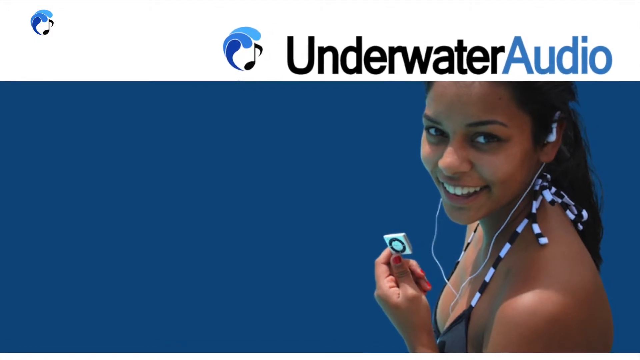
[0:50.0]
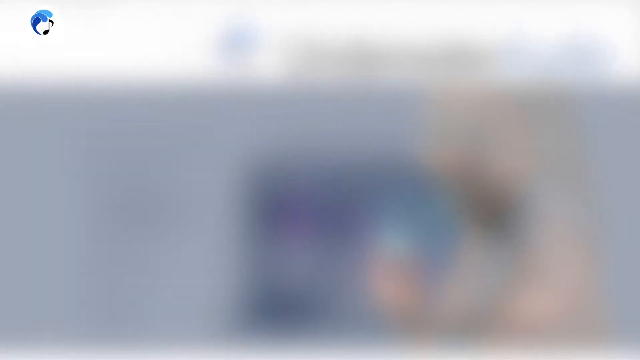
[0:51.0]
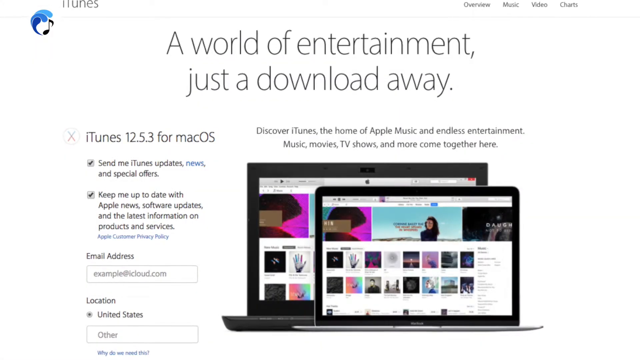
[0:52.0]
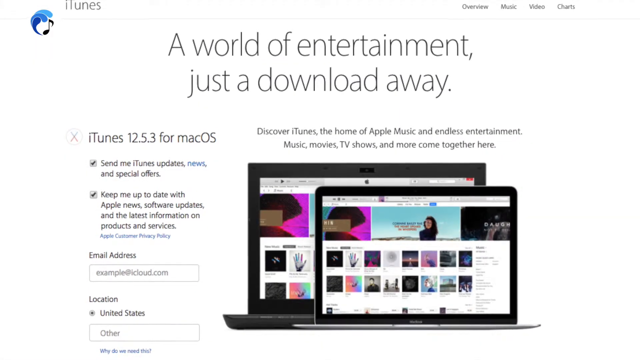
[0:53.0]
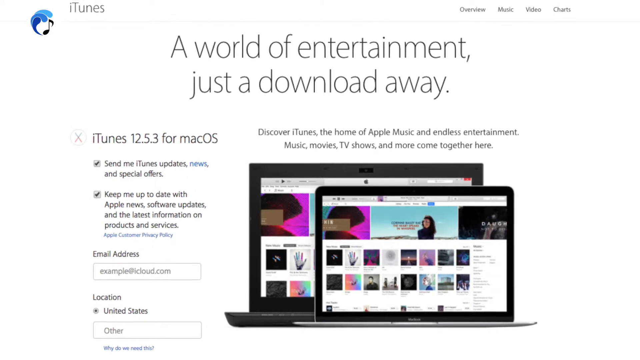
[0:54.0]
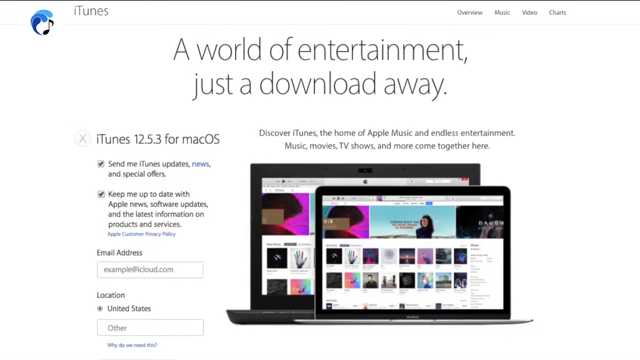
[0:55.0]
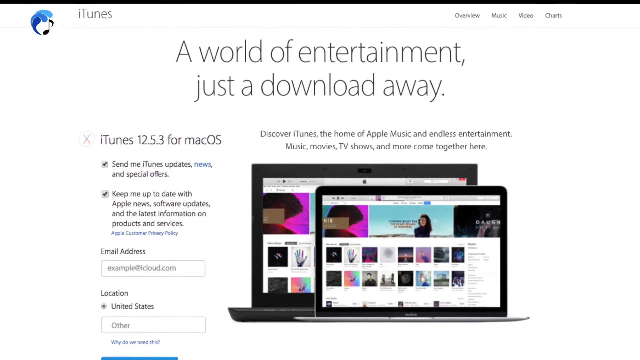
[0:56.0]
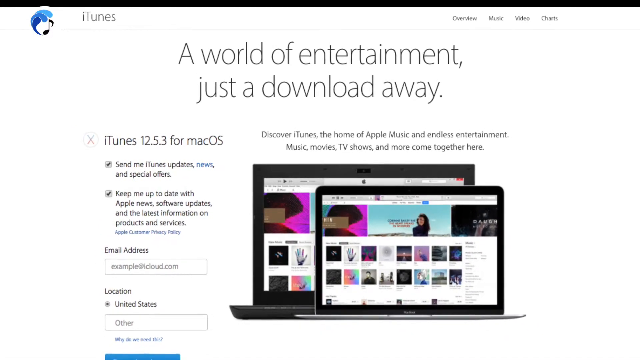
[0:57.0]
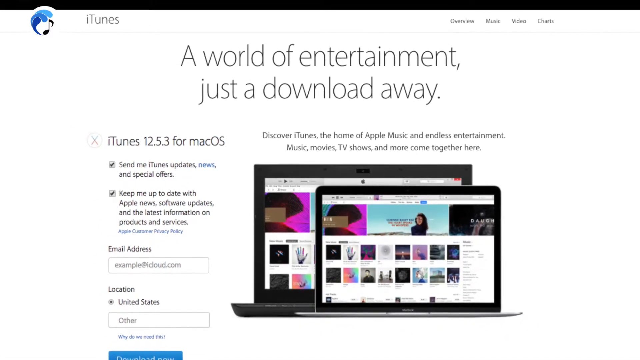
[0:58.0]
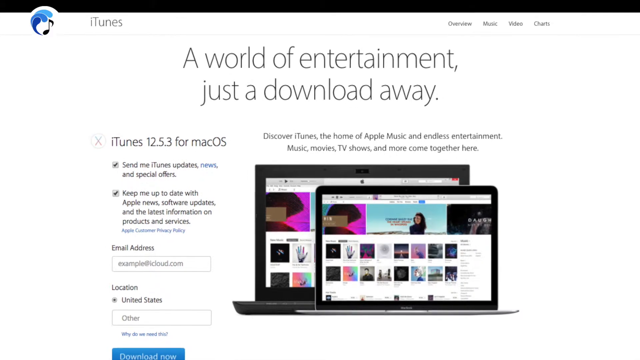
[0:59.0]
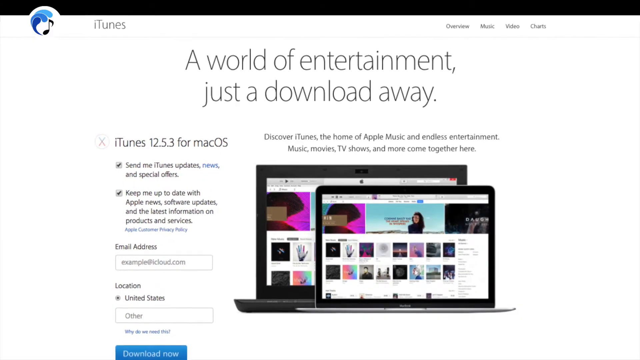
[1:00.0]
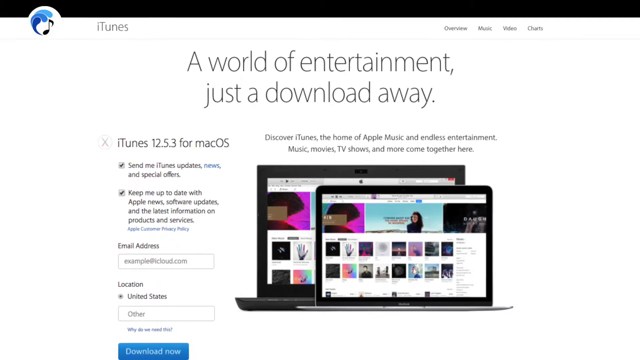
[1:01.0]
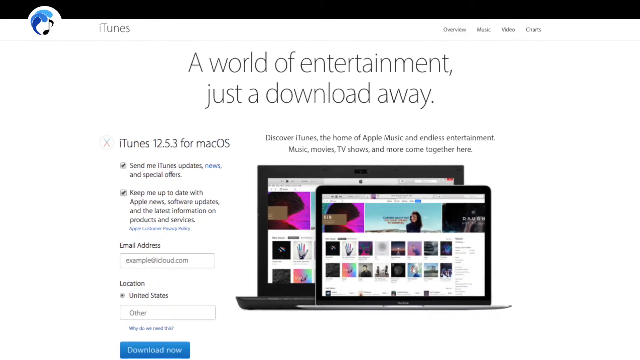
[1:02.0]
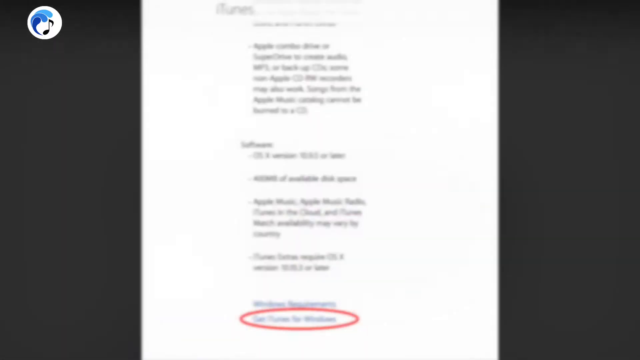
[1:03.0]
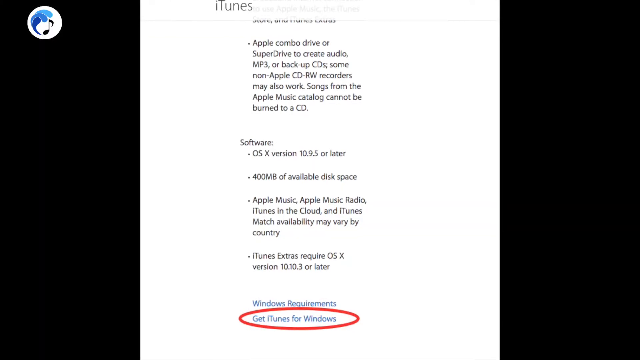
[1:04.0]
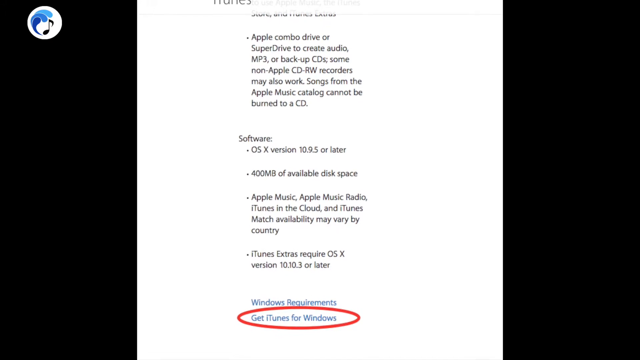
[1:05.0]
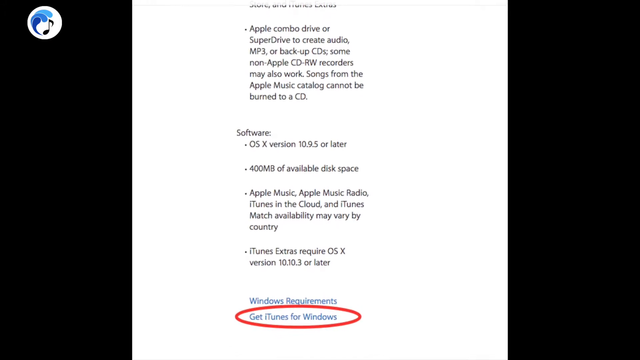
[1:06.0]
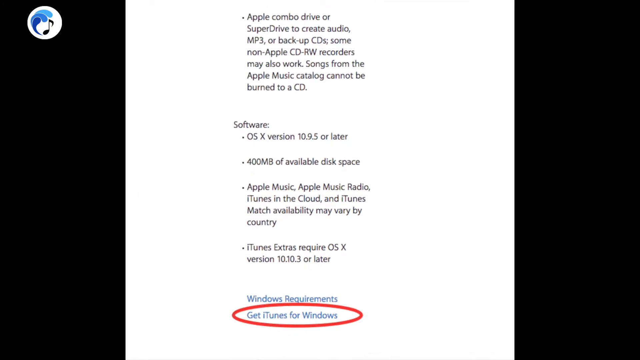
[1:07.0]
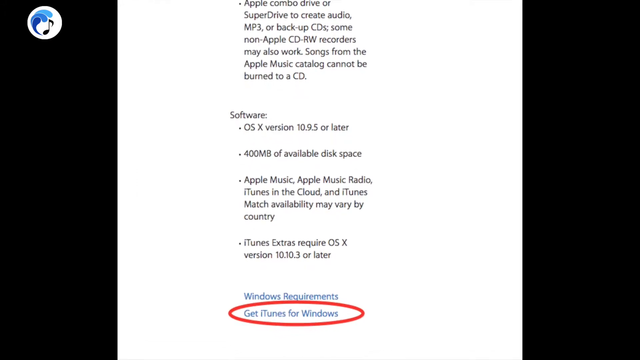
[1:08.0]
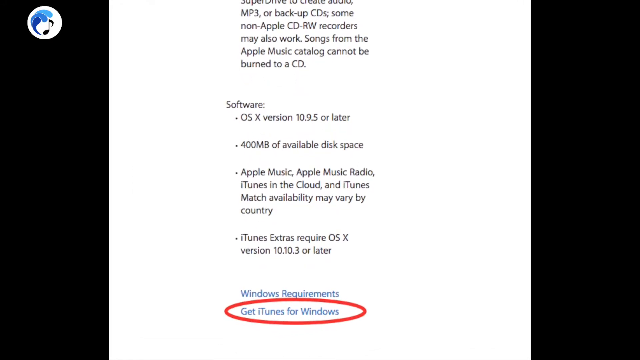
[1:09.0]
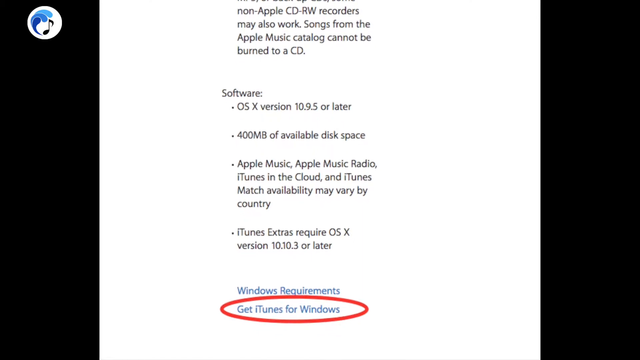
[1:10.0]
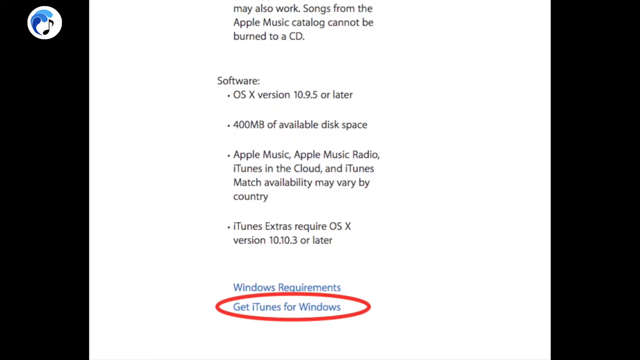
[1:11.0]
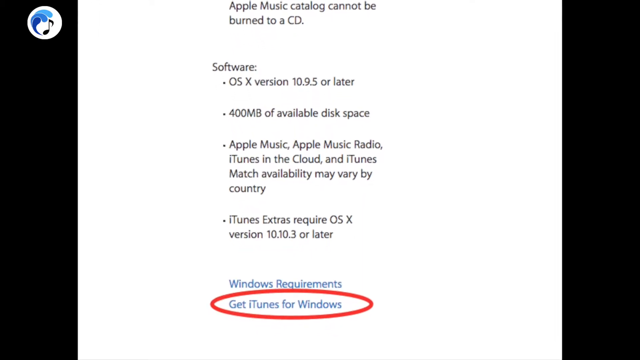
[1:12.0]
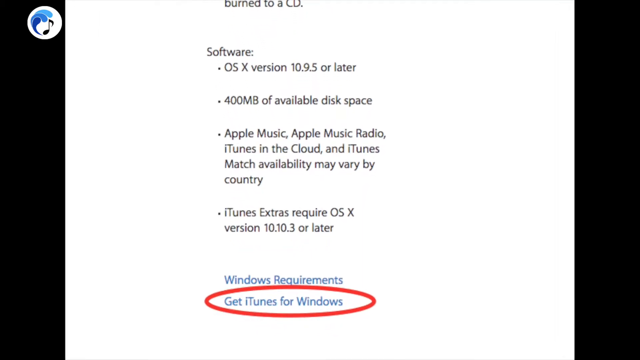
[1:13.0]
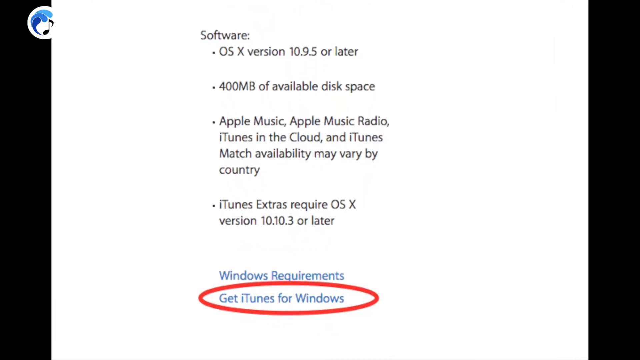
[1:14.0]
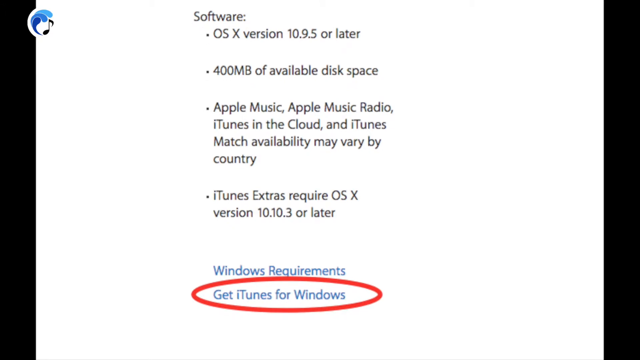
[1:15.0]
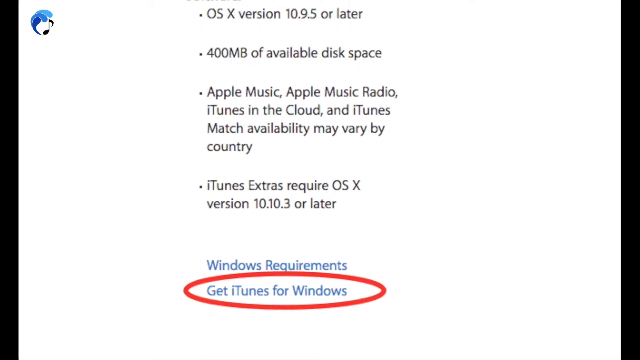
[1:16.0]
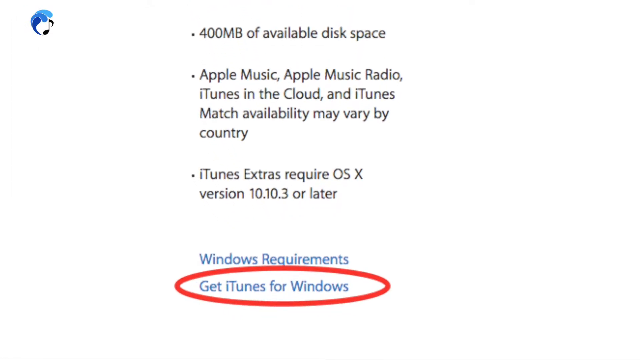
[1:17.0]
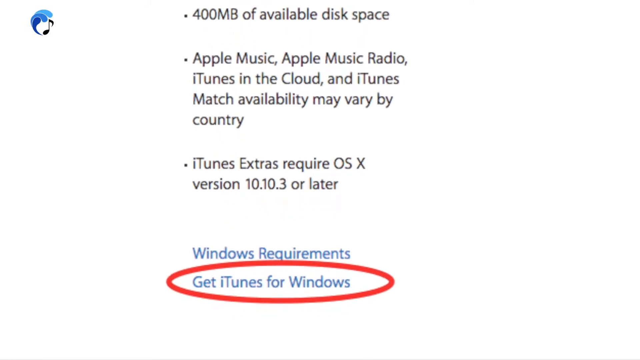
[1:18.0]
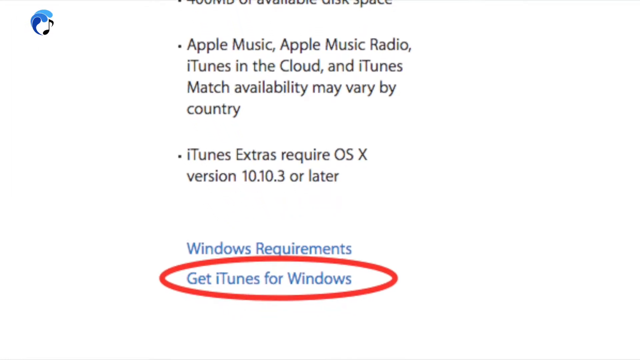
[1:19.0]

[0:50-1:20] The screen shows the smiling woman with "underwater audio" and the iPod Touch, then fades into the next page, which looks like the iTunes store online. Tabs at the top read "Overview," "Music," "Video" and "Charts," and "iTunes" appears in the left corner. Below that, in big letters, is apparently the title: "A World of Entertainment, just to download away." Under it is "iTunes 12.5.3 for macOS," then "Send me iTunes updates, news, and special offers" with a checkbox next to it, apparently for signing up. Below that is another checkbox, "keep me up to date with Apple news, software updates" and "latest information on products and services," and under that, smaller hyperlinked text reads "Apple customer privacy policy." Below is a box for entering an email address containing "example@iCloud.com," and under that is something about a location. In the middle of the screen are two MacBooks that appear to show the iTunes store, with text reading "Discover iTunes, the home of Apple Music and endless entertainment."